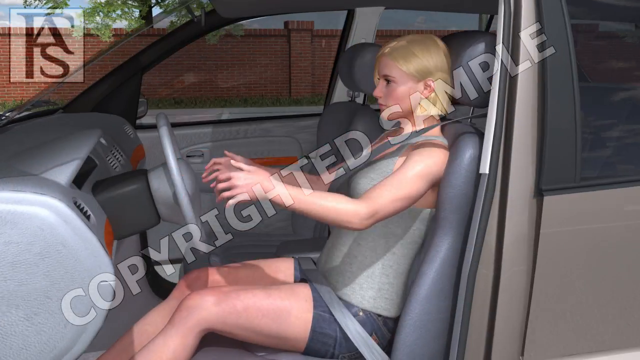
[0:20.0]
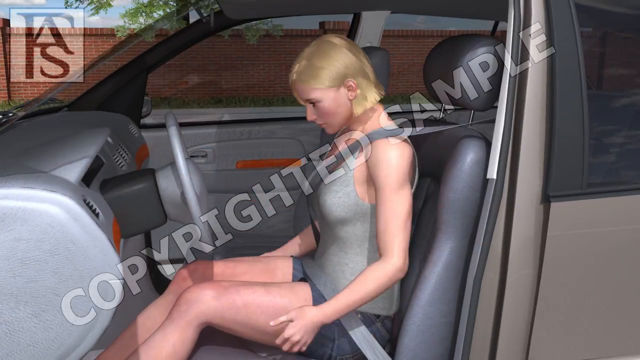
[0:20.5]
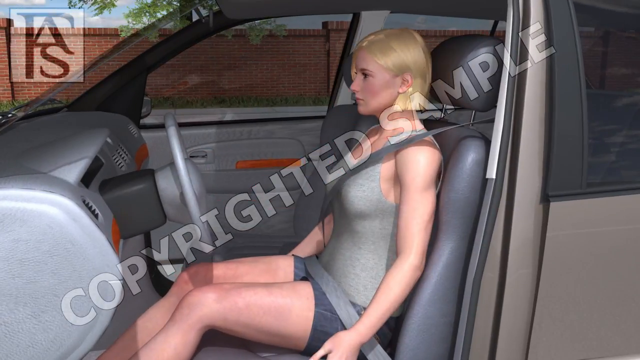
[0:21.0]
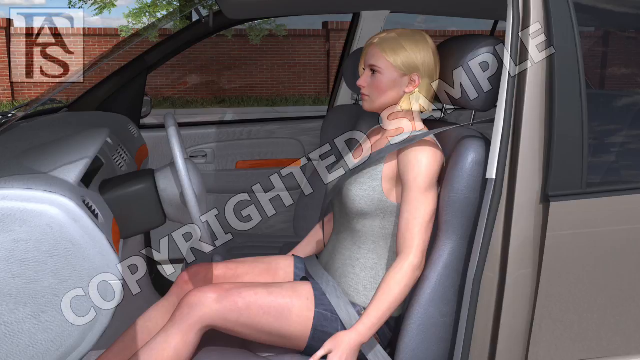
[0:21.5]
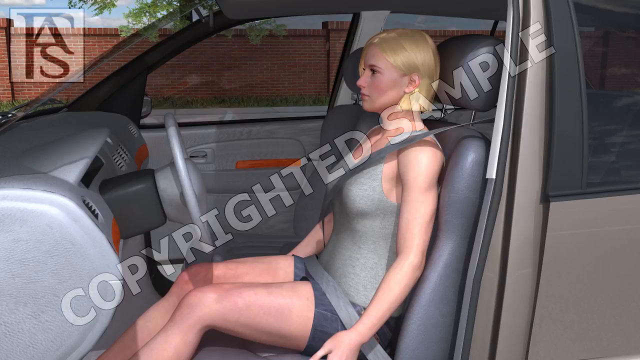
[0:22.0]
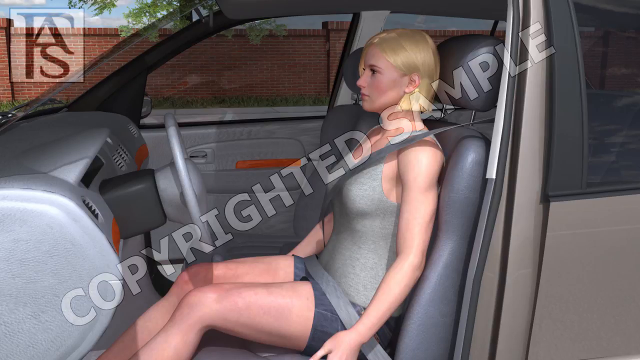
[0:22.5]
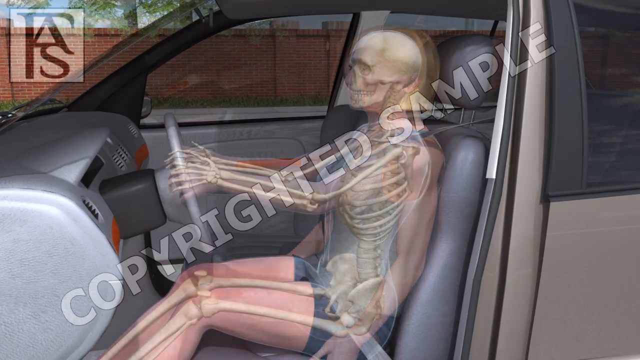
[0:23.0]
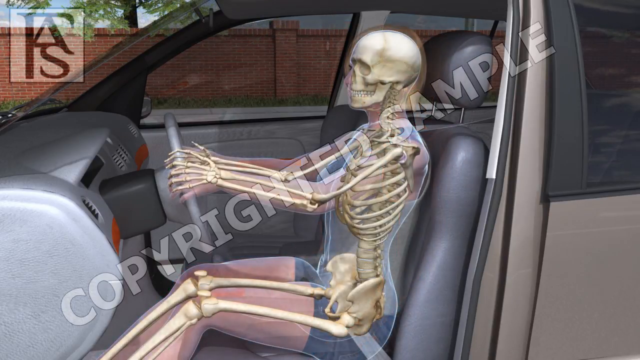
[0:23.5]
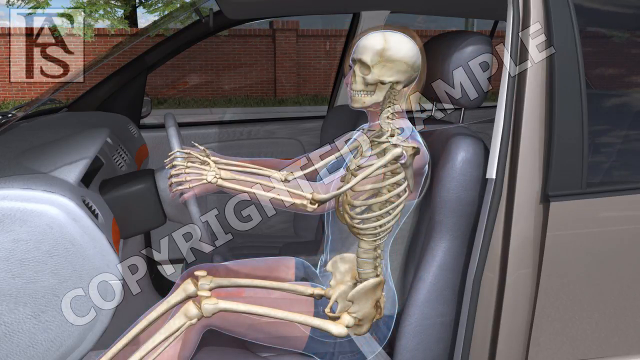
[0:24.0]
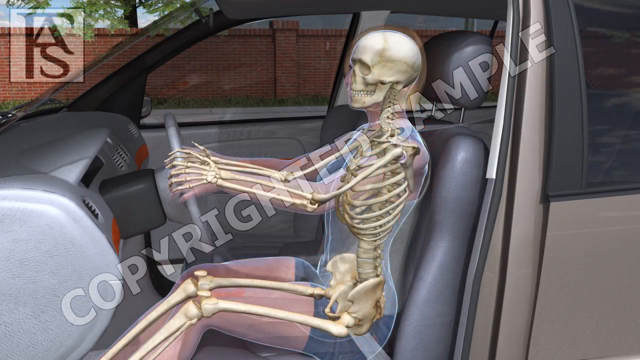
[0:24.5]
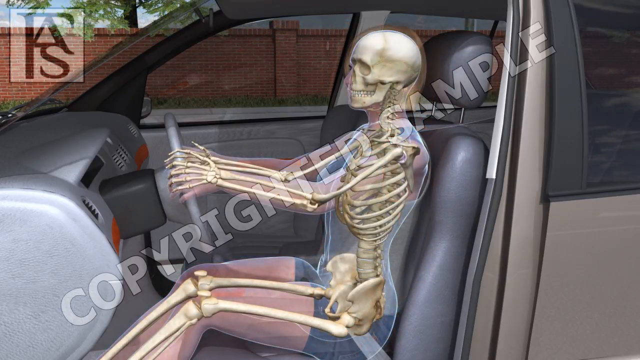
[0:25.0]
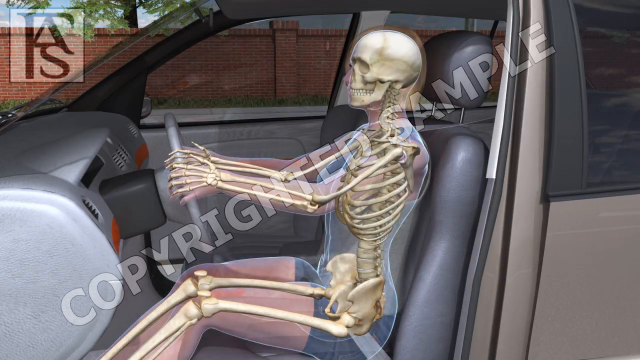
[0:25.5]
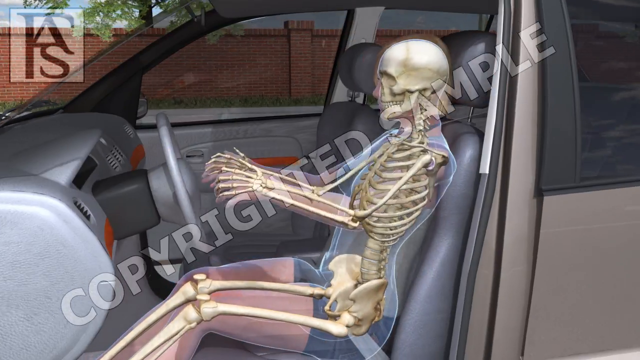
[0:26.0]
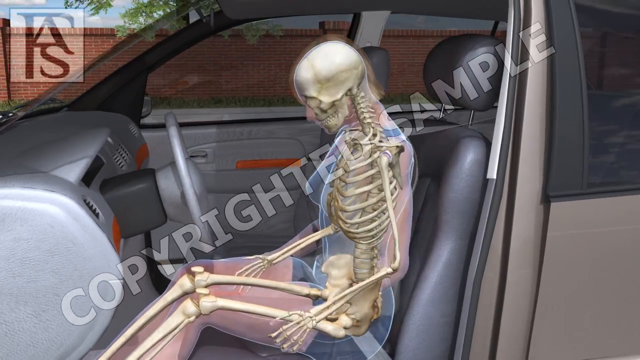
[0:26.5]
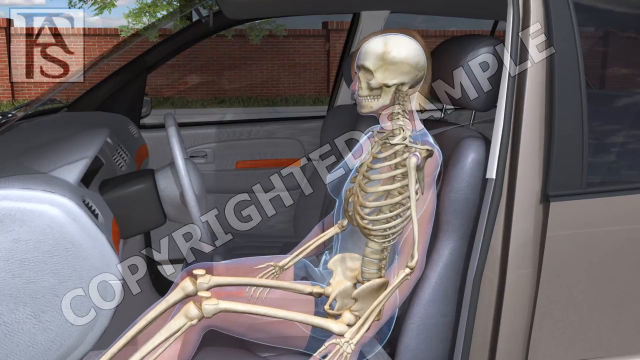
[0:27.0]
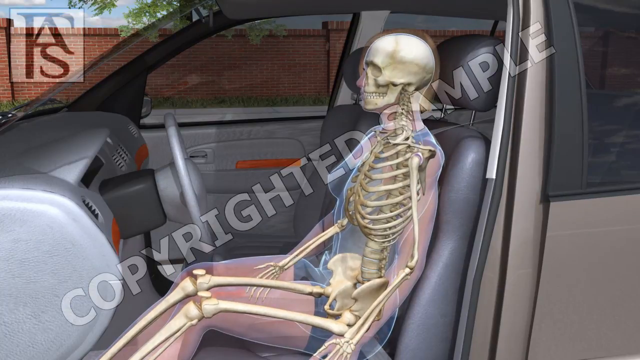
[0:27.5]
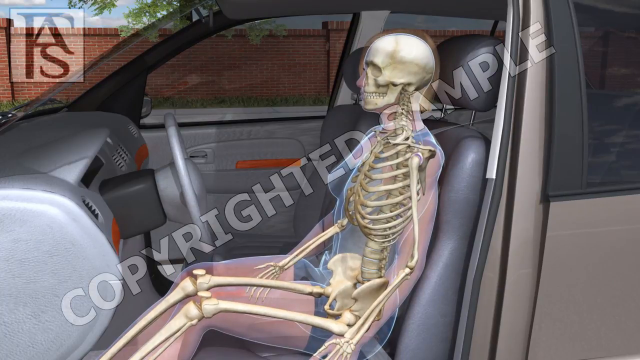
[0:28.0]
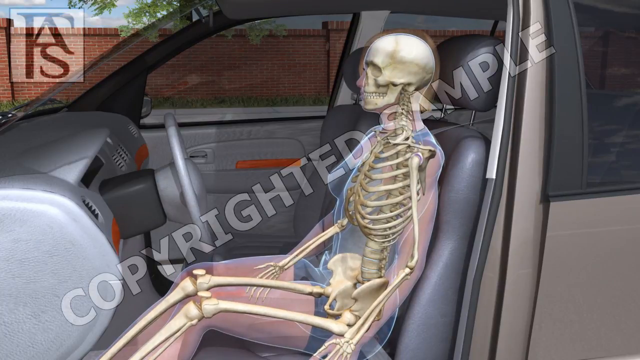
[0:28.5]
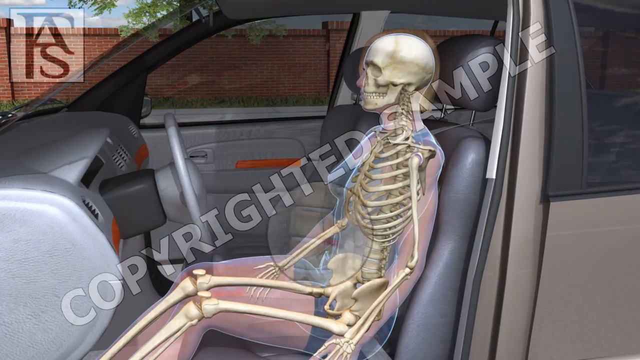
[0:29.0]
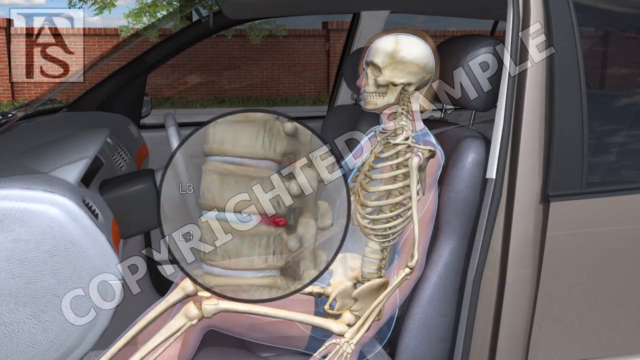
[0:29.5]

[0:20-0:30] The illustration shows how the human body moves when a person sitting in the driver's seat of a vehicle is rear-ended by the car behind them in a low-speed impact of 10 to 15 miles per hour. The body gets a very jarring jolt: the neck is whipped forward and then backward, and even with the seatbelt on, the body is suddenly moved forward and then backward, with the neck and head going forward and backward in rapid motion.